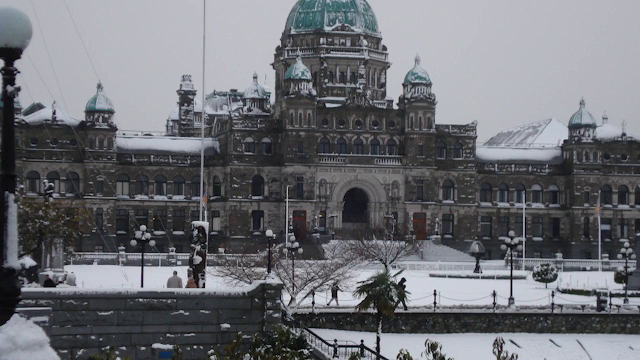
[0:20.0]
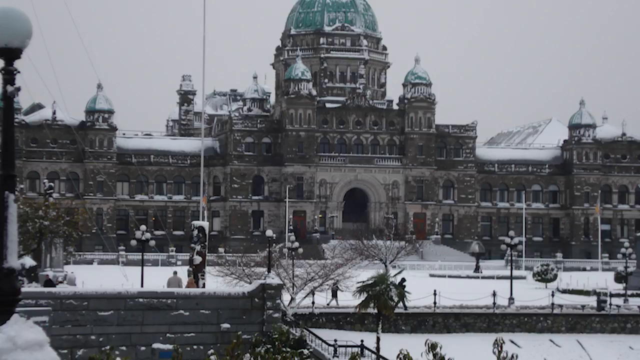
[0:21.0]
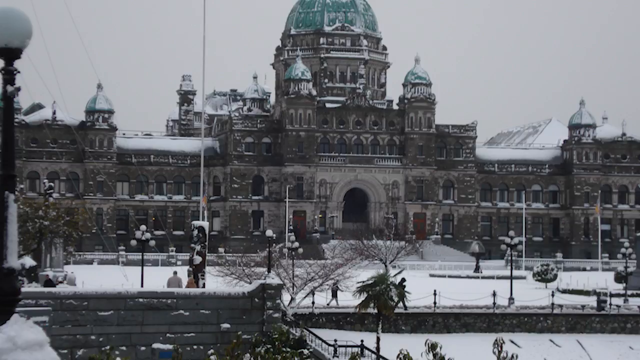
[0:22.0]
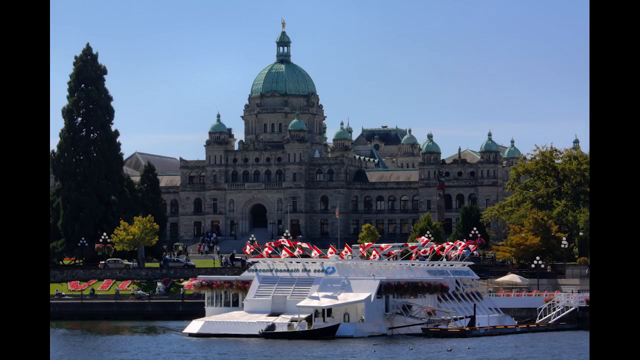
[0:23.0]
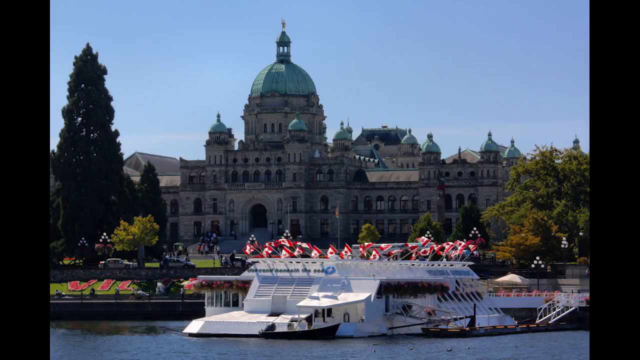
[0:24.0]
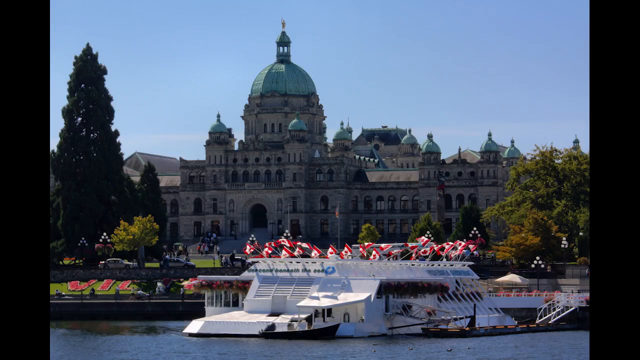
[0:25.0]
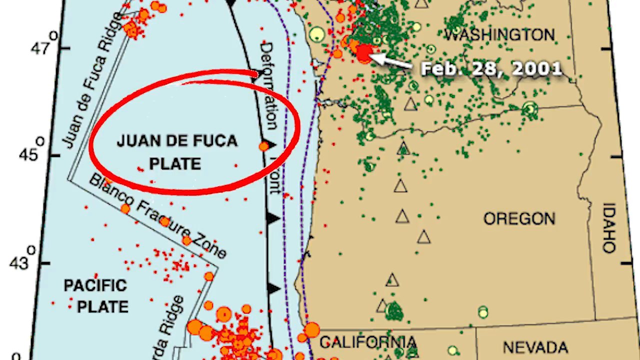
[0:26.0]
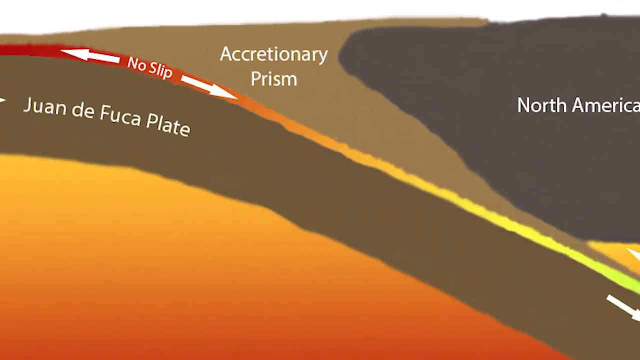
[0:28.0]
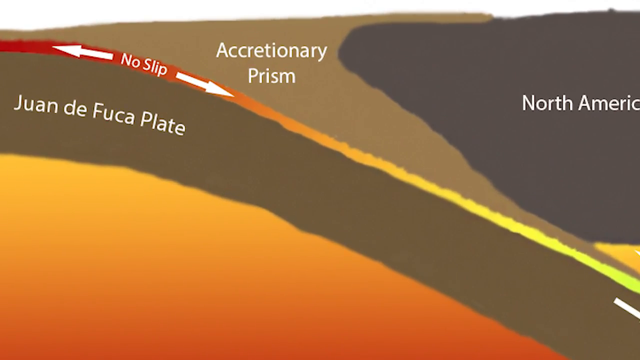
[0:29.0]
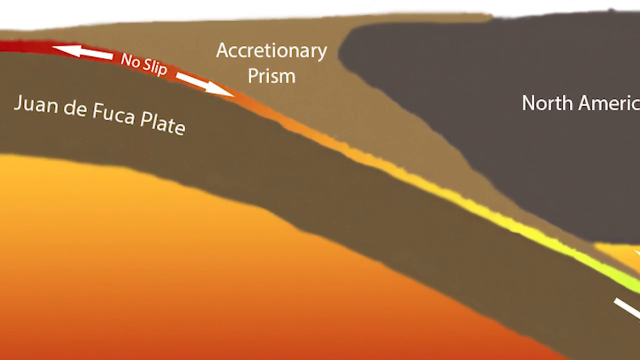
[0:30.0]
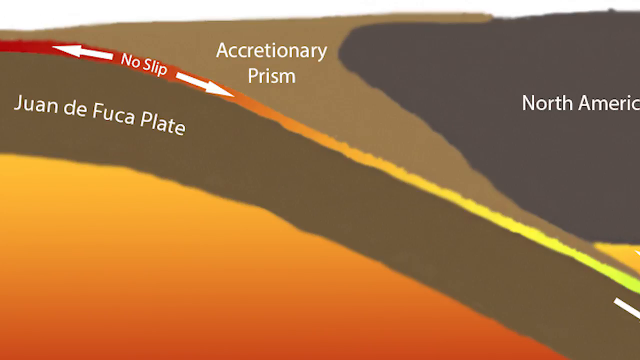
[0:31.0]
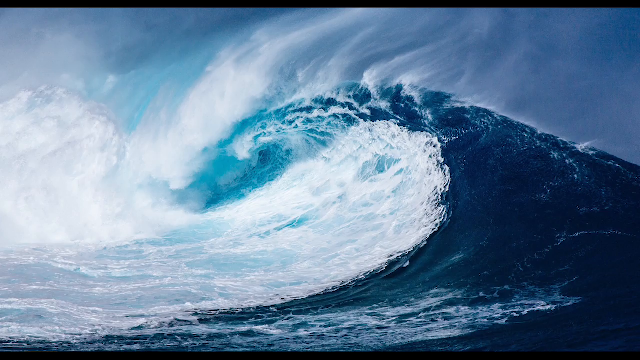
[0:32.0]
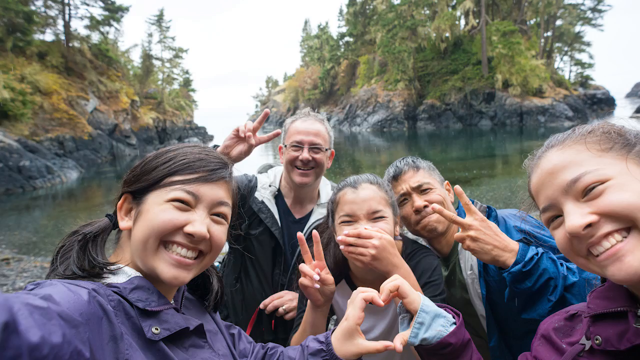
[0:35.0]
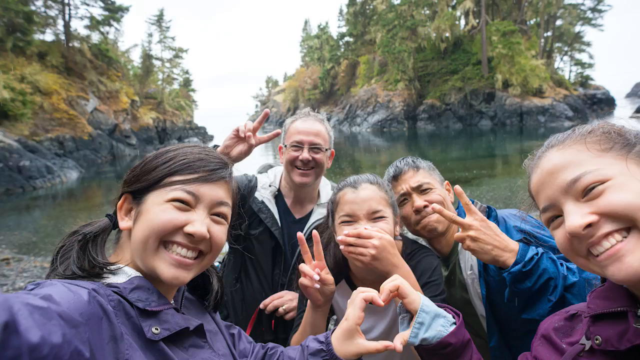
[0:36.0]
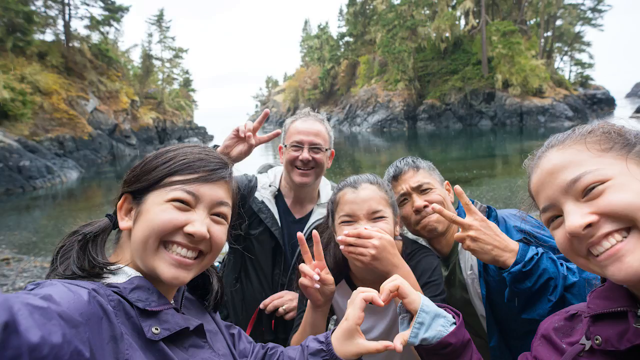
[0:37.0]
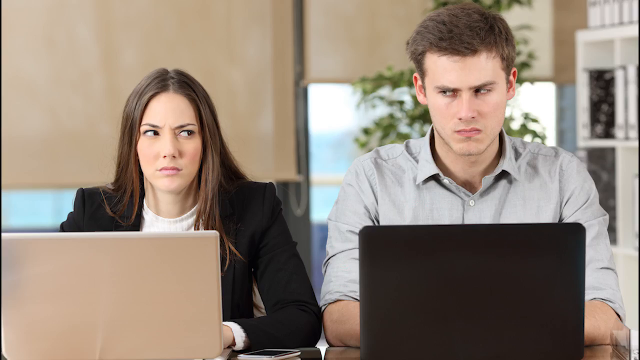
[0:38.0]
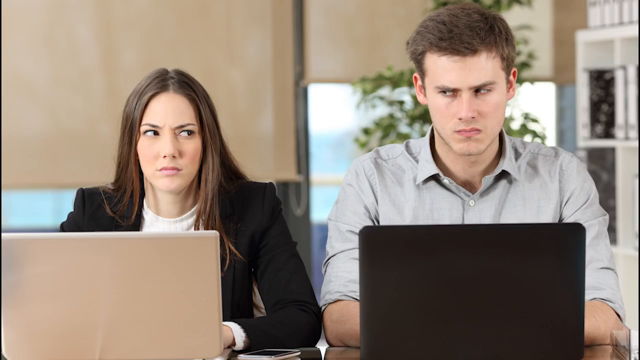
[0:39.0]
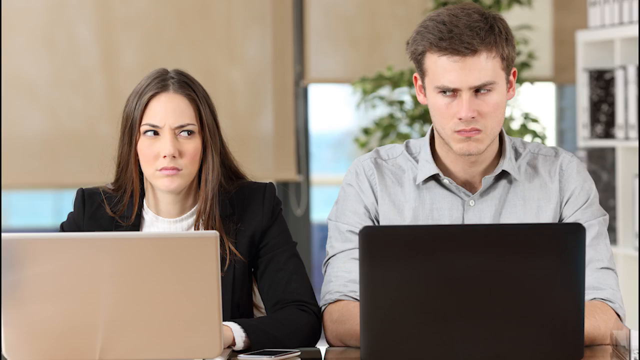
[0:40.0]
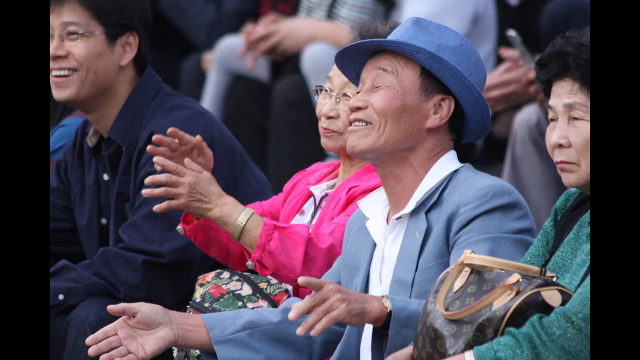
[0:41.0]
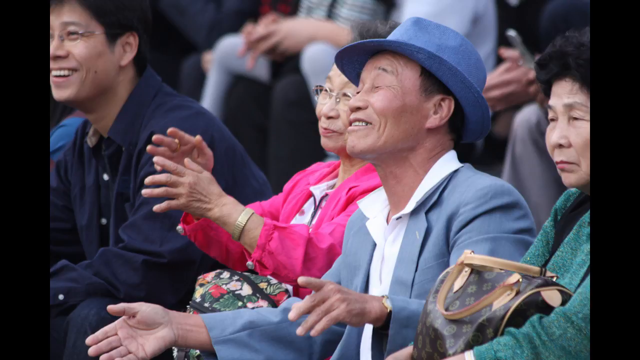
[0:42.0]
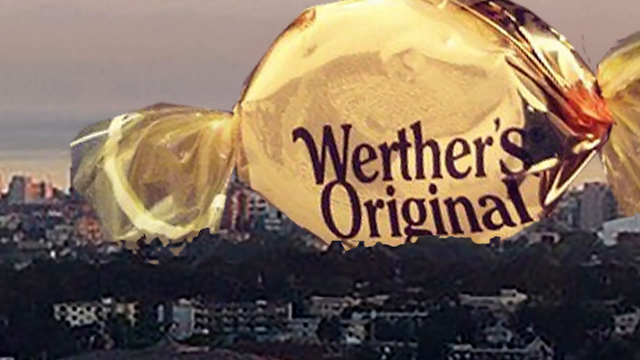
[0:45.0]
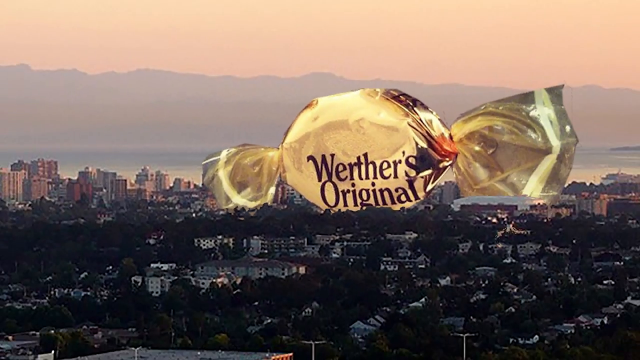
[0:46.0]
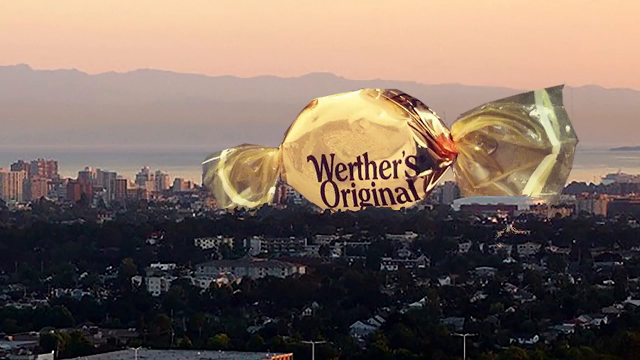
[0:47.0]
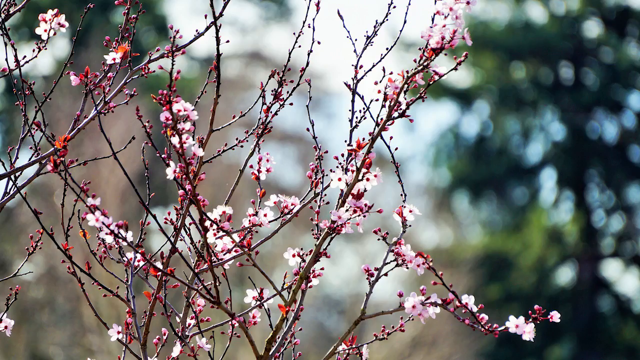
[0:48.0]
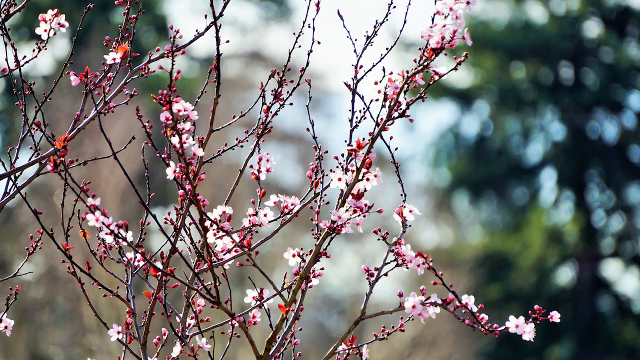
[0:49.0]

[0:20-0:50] An image shows a kind of grayish light building with domes that look green turquoise, covered in snow. The same building is then shown from a different angle, this time not covered in snow, with a structure in the foreground that has a whole bunch of Canadian flags on it. The video cuts to a map with a red circle around red and black text that says "Juan de Fuca," which seems to be on the Pacific Ocean; on the right side, land is labeled Washington and Oregon. Another slide shows that same name, with arrows pointing left and right above it and "no slip" written between them. Next is a picture of a wave with a white crest, then five people posing for pictures, the majority holding up peace signs. Two people sit in front of laptops looking at each other, kind of angry. Then two people sit in what looks like some kind of public area with more people sitting around them; one of them wears a blue hat, and the woman wears a pink jacket. Finally, a candy seems to float in the air with a cityscape in the background.